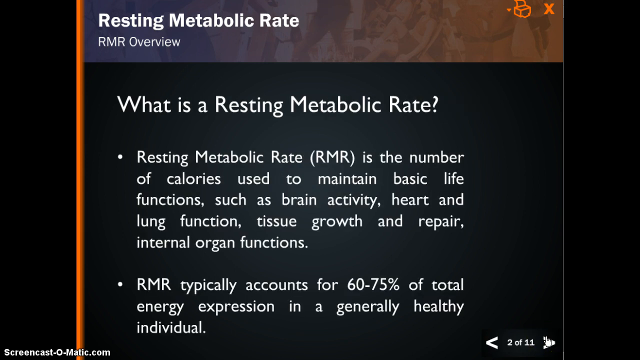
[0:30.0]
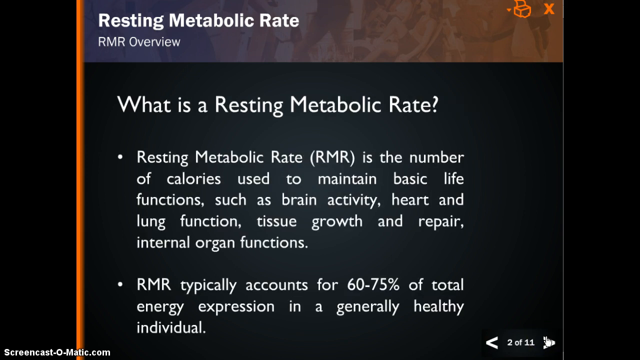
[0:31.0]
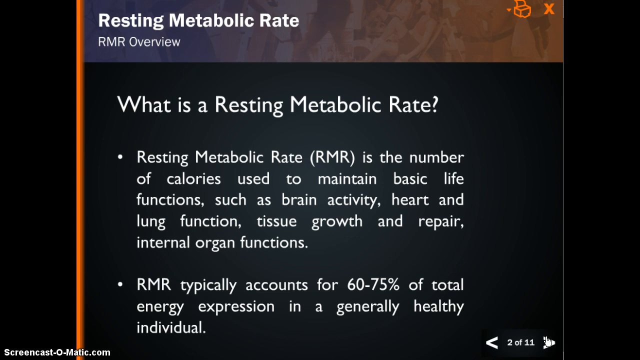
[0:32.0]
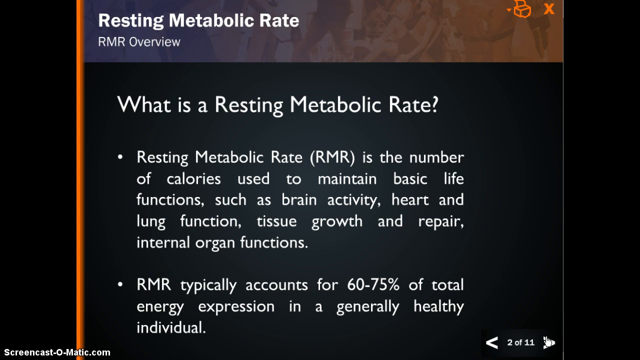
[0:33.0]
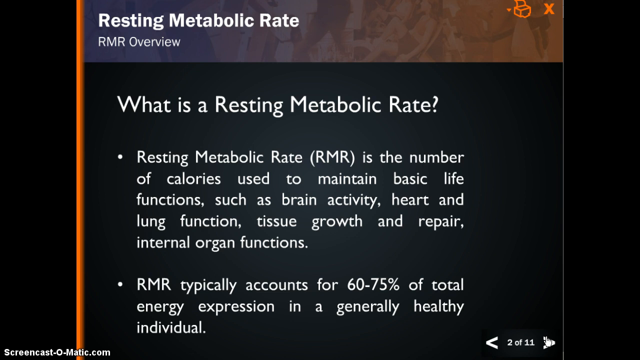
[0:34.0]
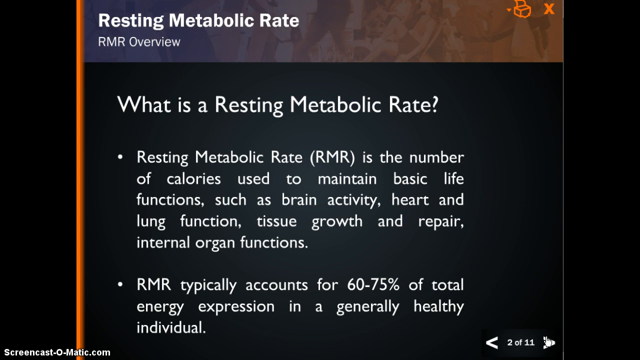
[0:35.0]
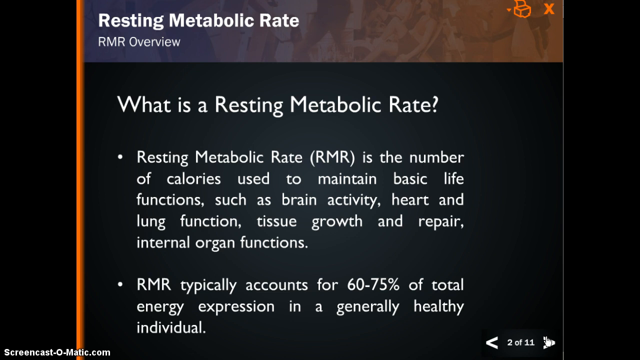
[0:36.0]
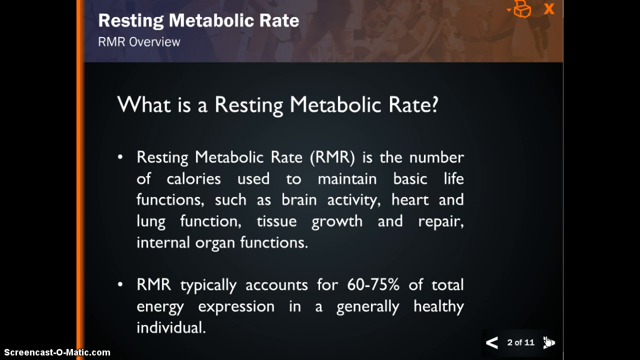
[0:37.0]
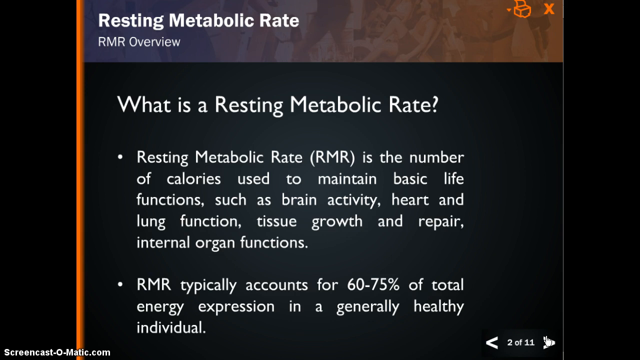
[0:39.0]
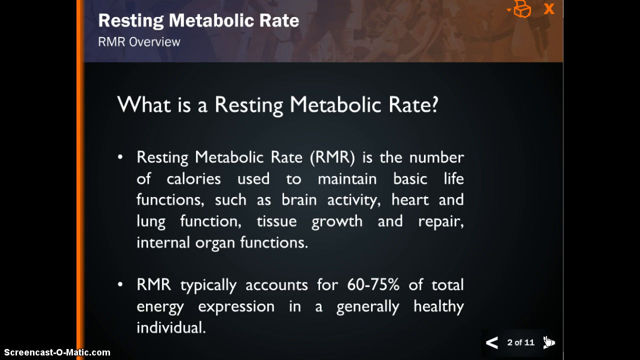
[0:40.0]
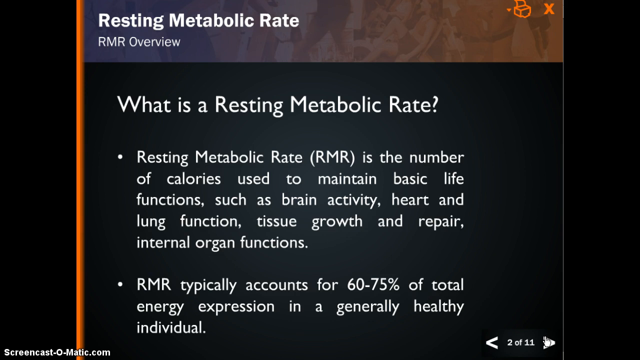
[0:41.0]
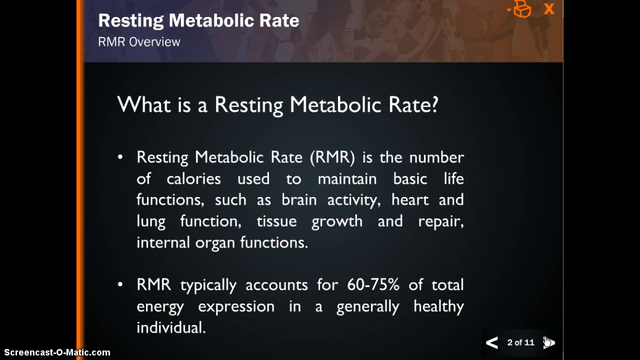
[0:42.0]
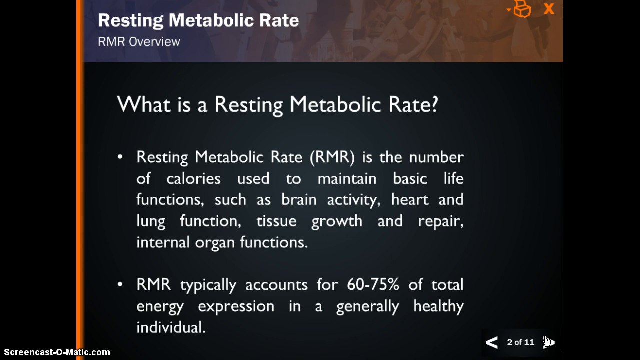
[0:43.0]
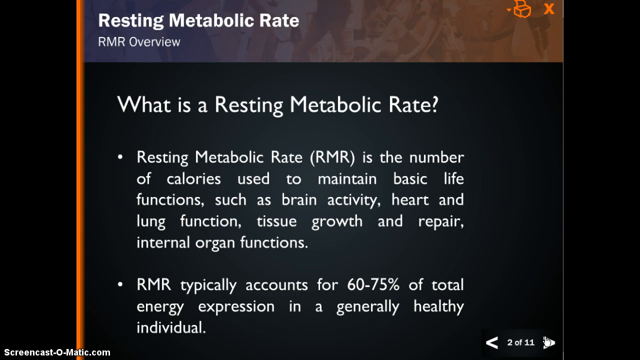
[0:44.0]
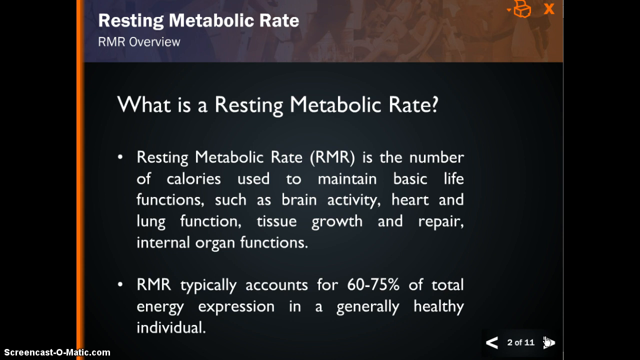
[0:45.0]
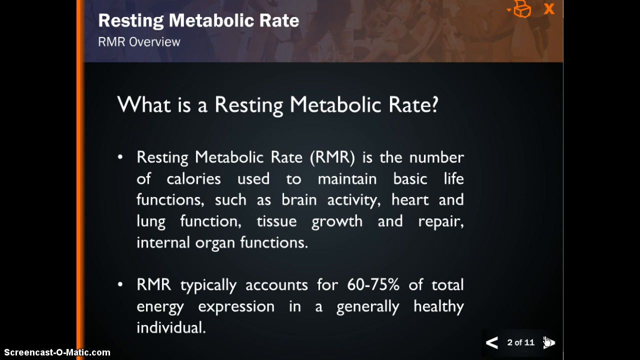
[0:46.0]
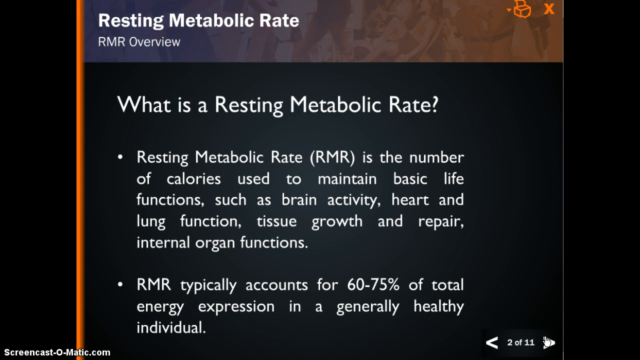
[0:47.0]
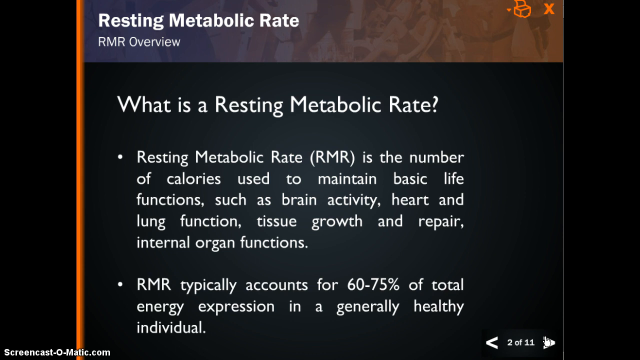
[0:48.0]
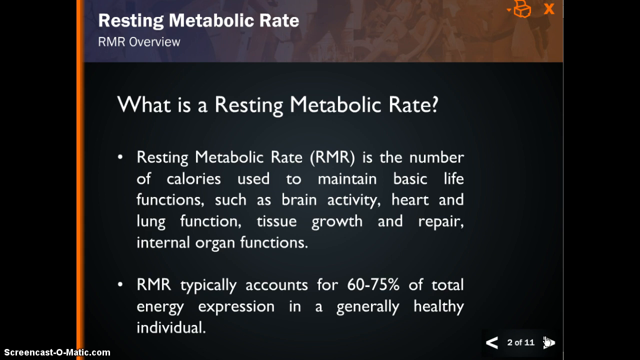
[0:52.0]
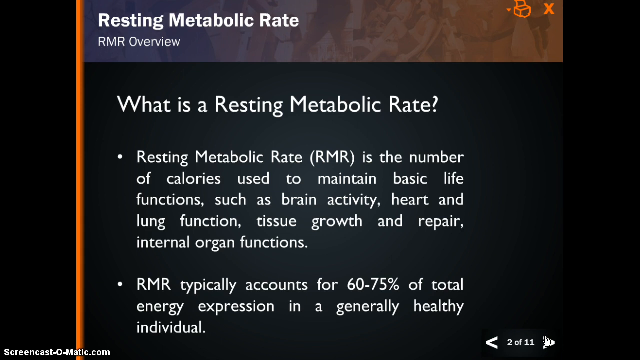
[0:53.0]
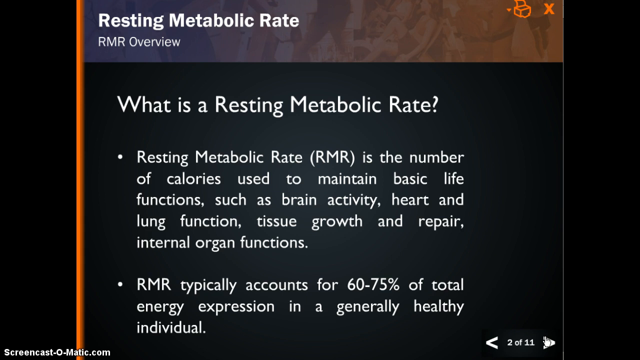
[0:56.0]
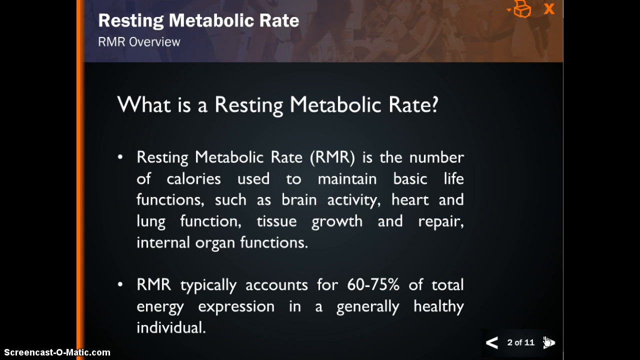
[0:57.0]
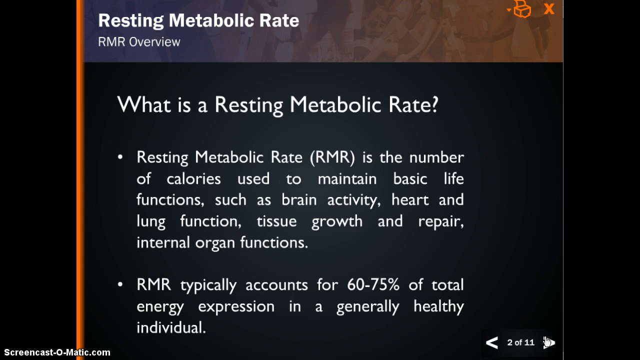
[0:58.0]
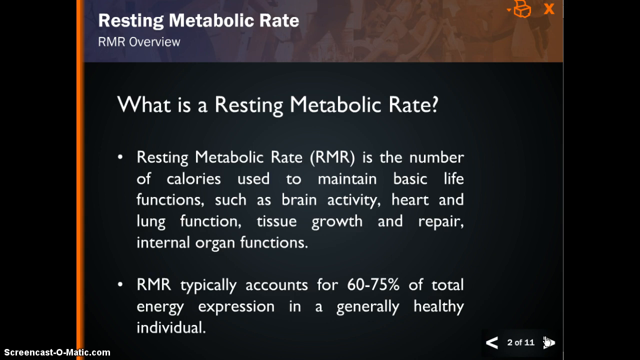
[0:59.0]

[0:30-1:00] The slide with the two bullet points about resting metabolic rate stays on screen. Its text is white on a black background, with a lighter center that fades into the black. The banner at the top of the screen is also written in white text, and the X and printer icons are orange. Behind the icons and the slide title is a translucent, heavily edited banner of what seems to be an individual walking and another person sitting down, with a color gradient running across it from blue to orange. An orange line on the left of the screen and a skinny white line on the right mark each side of the slide, and beyond the lines on either side is just a black screen.